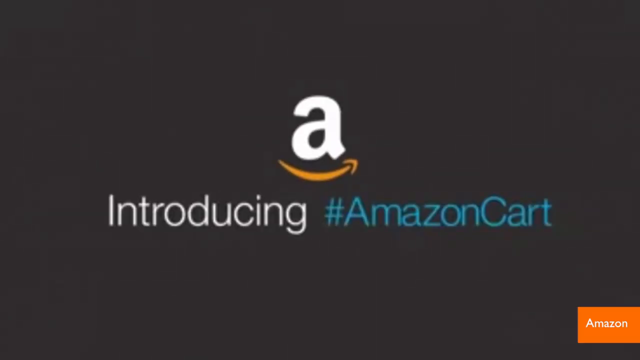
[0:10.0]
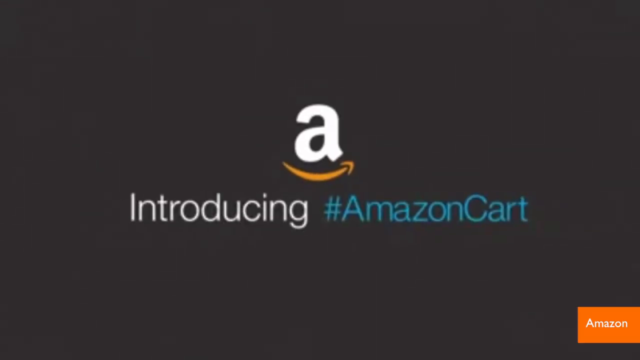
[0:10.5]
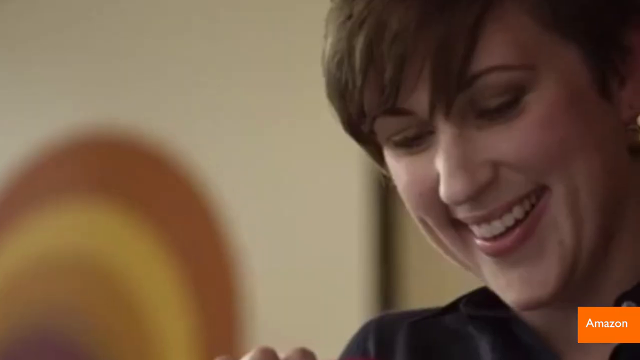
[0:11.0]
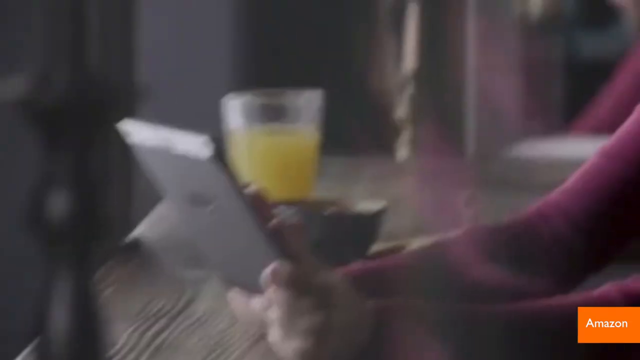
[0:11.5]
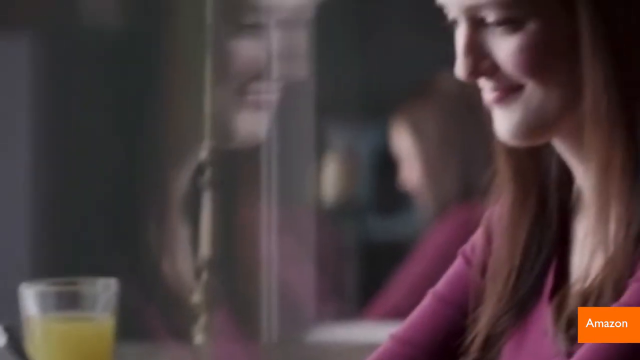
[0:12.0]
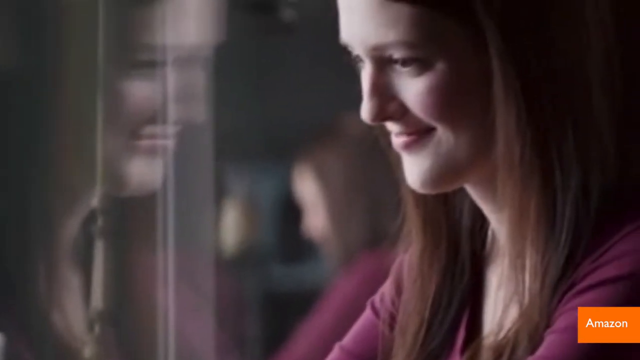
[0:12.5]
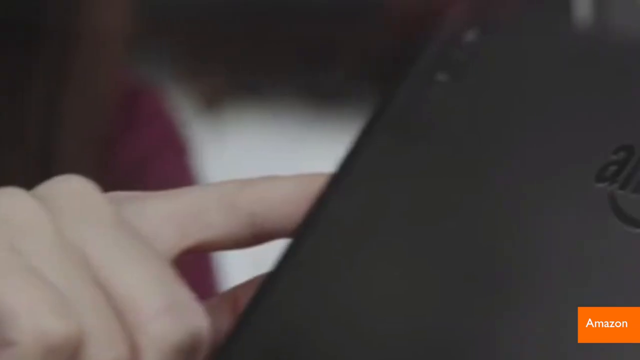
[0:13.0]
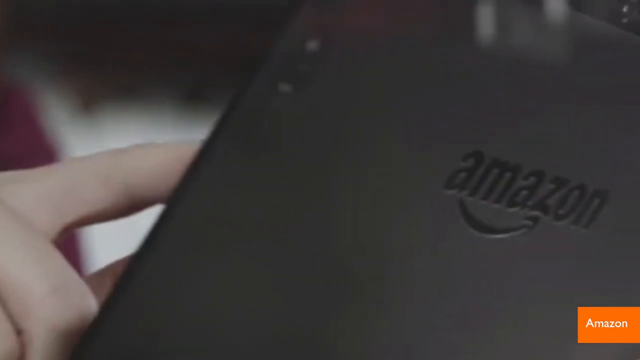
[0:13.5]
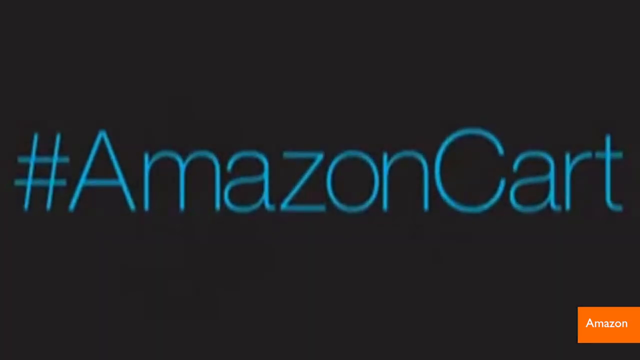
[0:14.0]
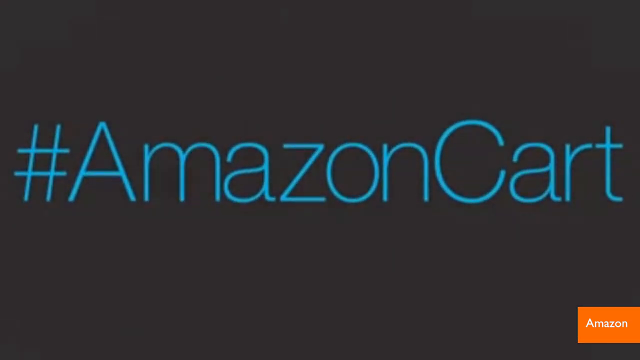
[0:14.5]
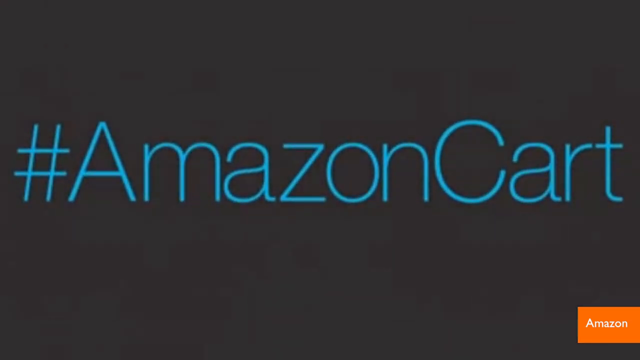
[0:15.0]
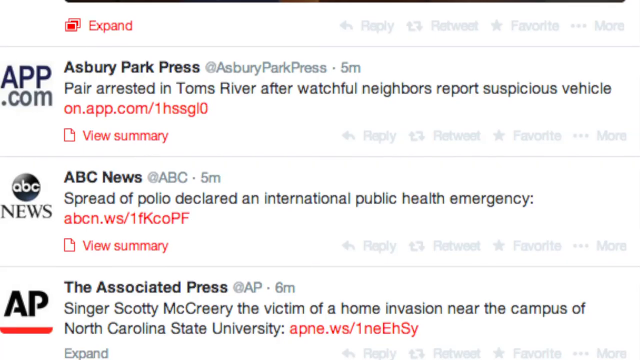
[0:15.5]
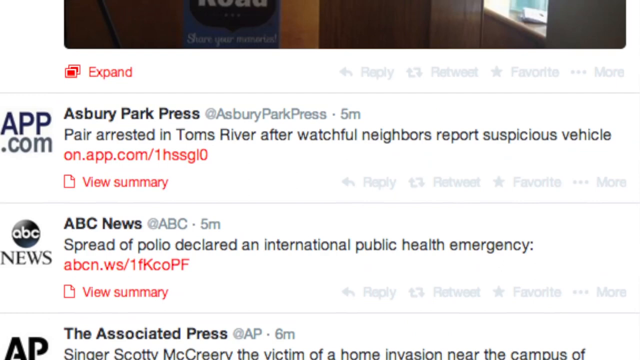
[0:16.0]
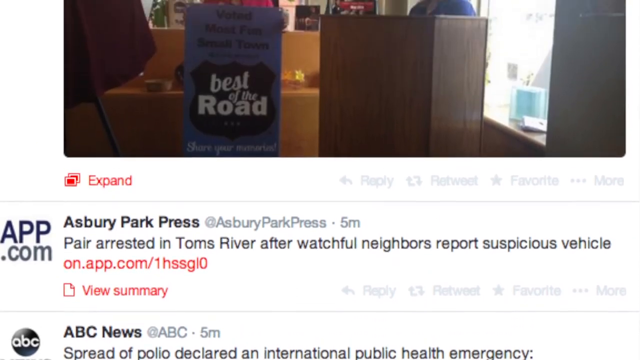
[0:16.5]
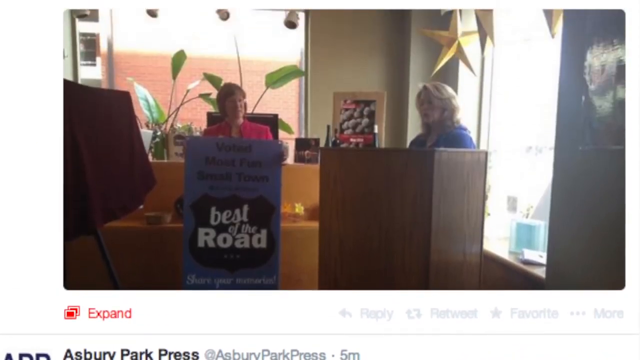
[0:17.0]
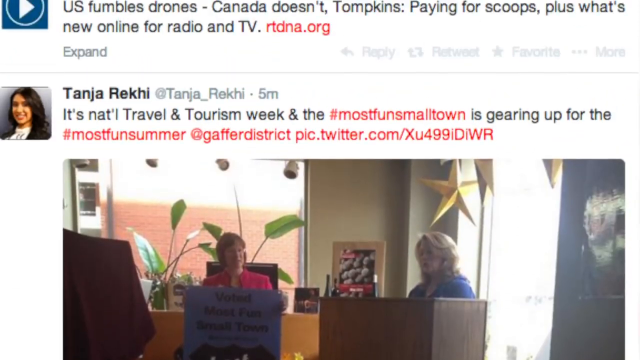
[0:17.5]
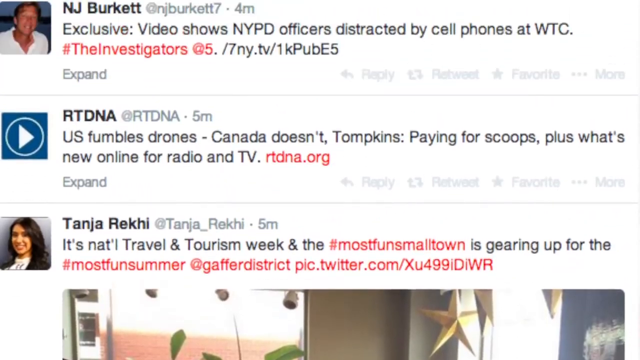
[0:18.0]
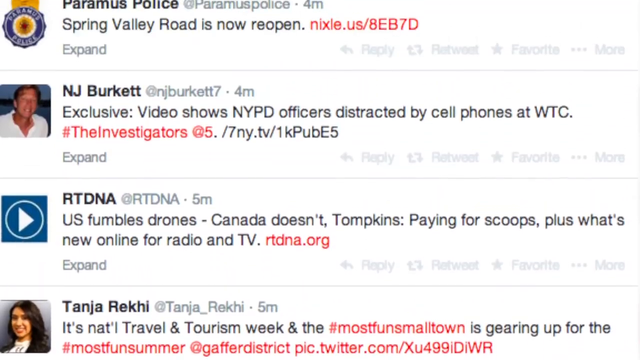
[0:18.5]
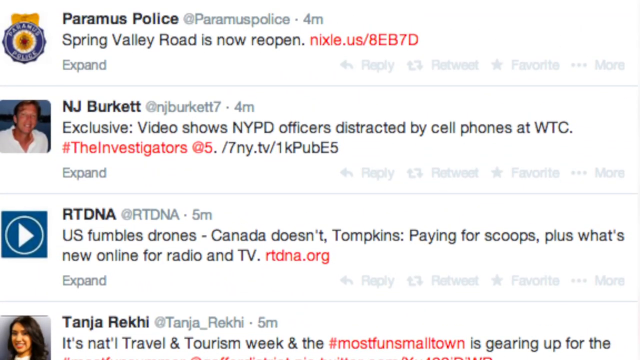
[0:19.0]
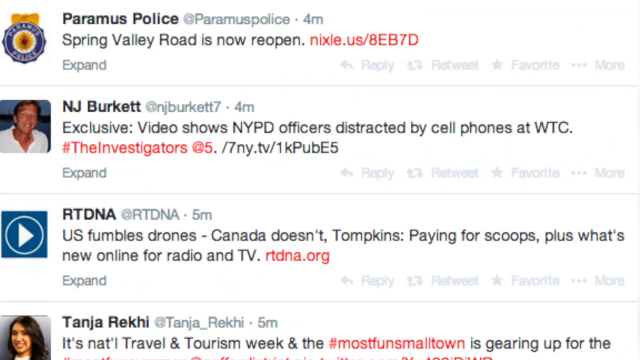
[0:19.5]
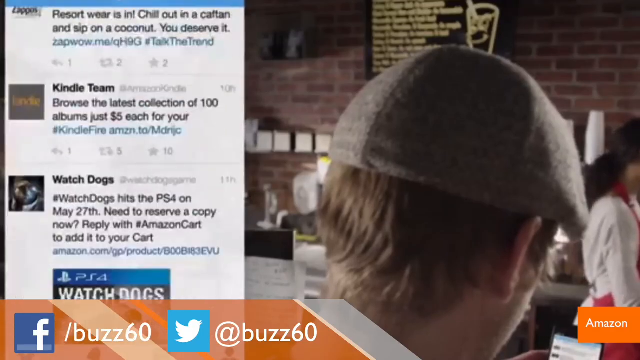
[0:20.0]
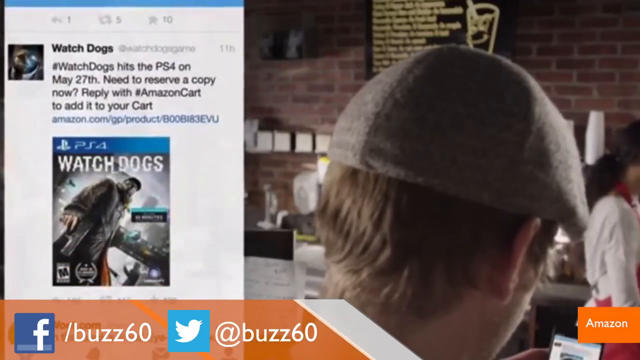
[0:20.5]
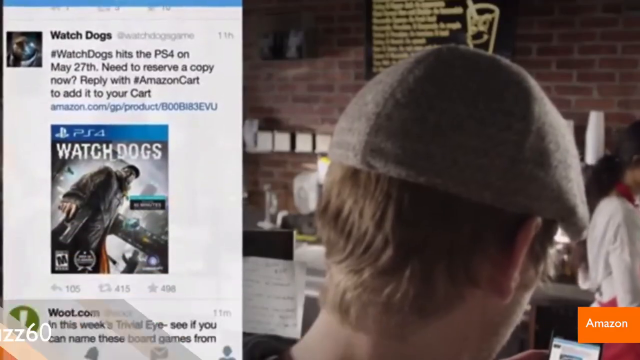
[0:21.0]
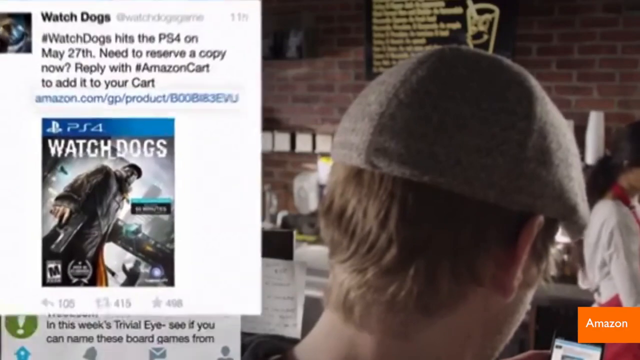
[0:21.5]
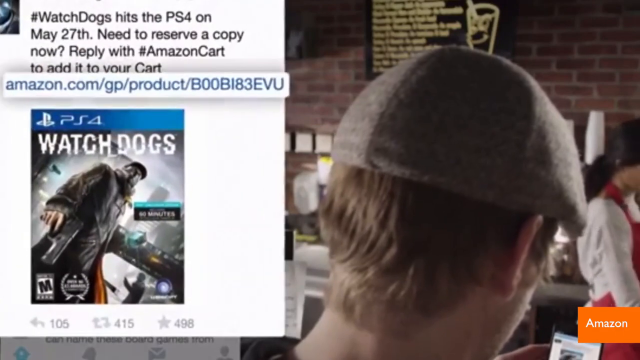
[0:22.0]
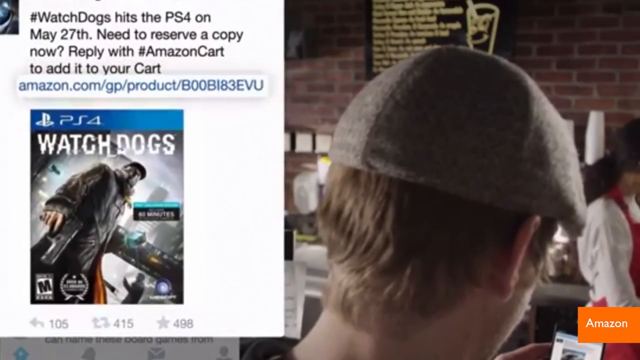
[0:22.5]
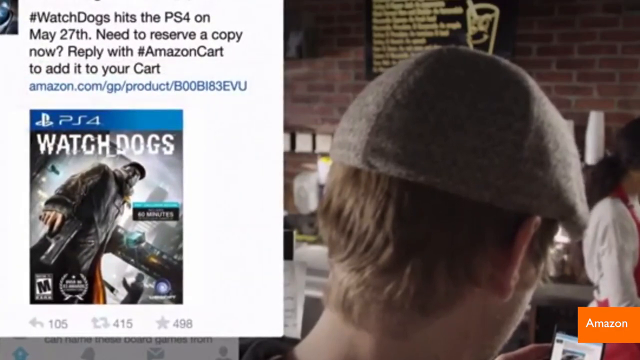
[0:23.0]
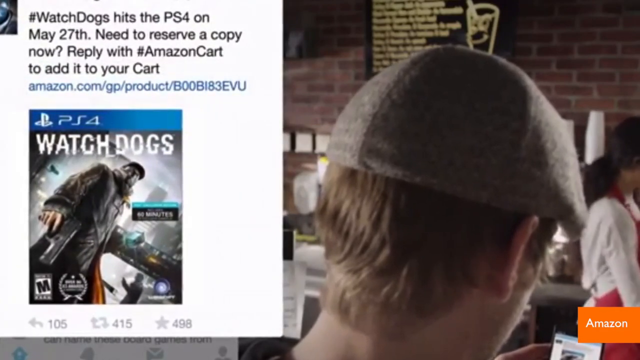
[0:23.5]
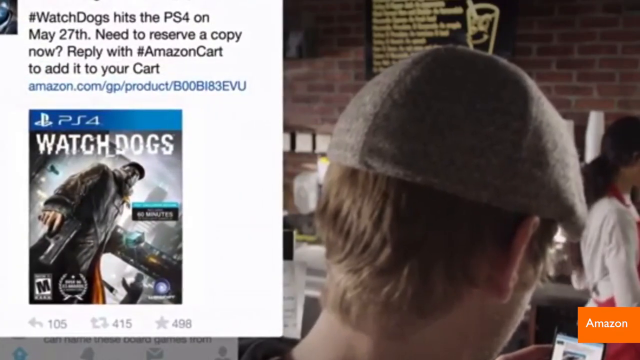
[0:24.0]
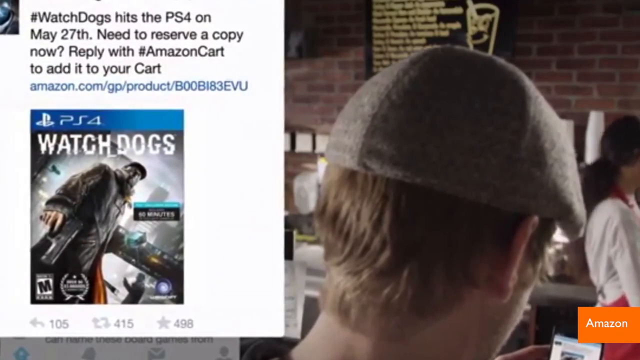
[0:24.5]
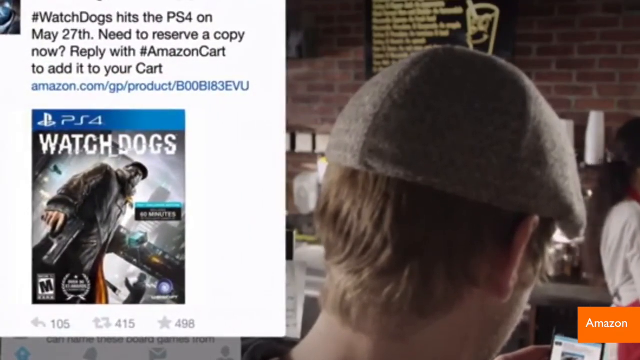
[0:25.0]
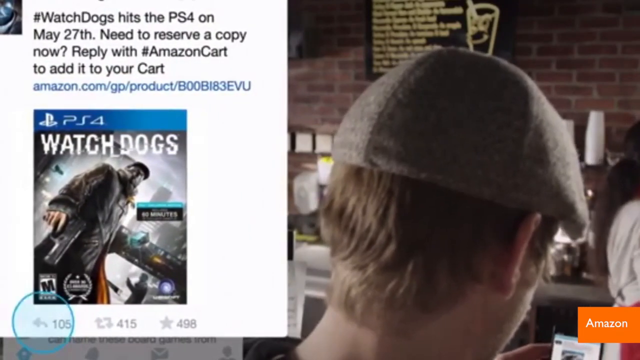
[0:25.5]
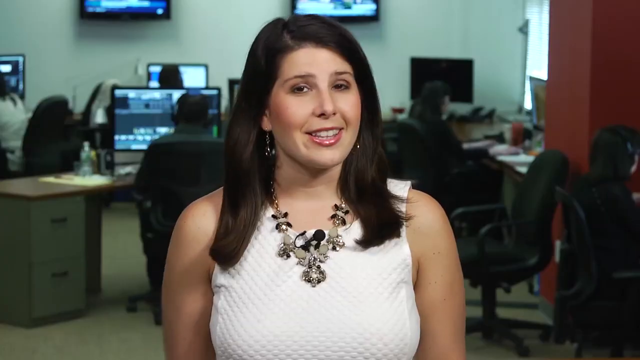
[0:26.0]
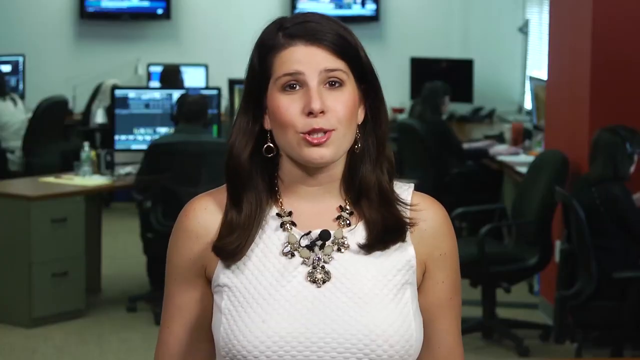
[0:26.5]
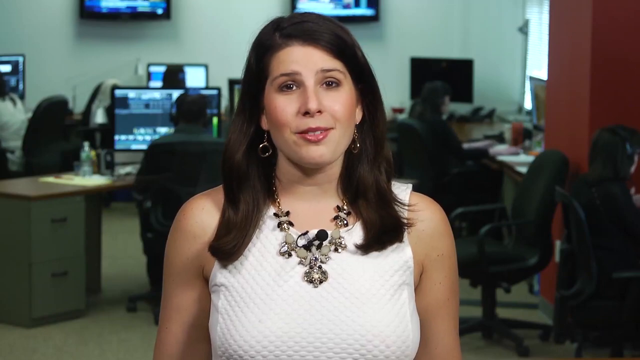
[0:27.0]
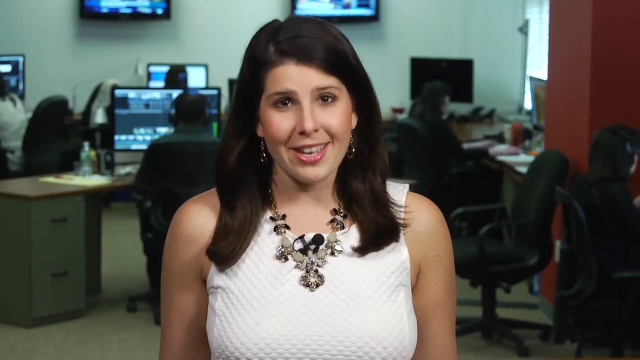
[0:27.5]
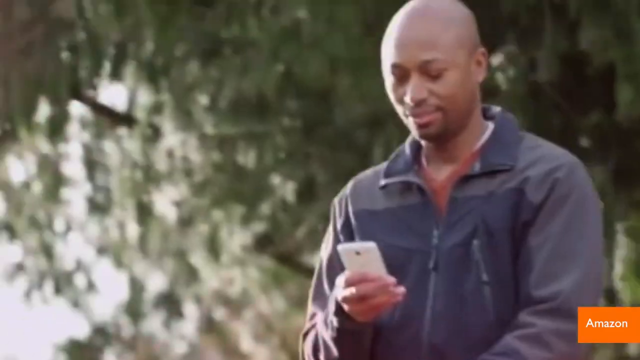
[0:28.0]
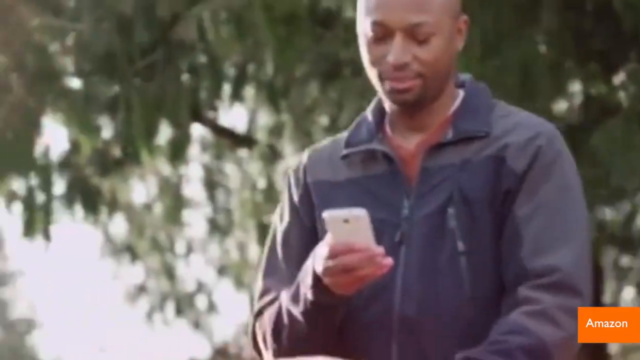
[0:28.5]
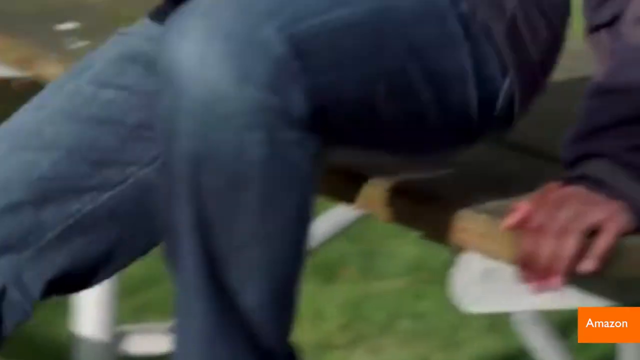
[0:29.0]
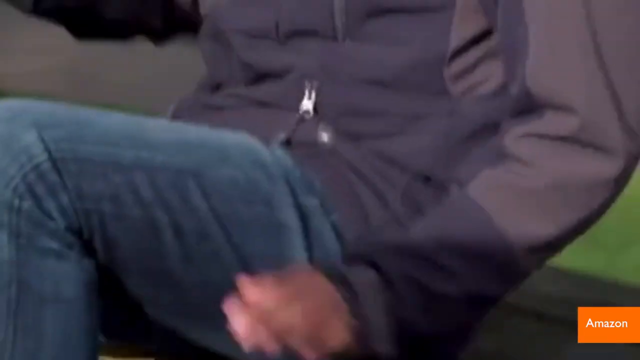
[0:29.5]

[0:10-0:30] The shot opens quickly on "Introducing Amazon Cart." A lady is smiling. A young girl is on a tablet, probably at her house; she smiles while scrolling on Amazon. Then "at Amazon Cart" appears, followed by a quick skip through social media posts, including one about travel and tourism; nothing about Amazon seems to be on them, apparently just different social media. A man's picture appears and the view scrolls down to text reading "Watchdog hits PS4. Need to reserve a copy? Reply with Amazon Cart and add it to your cart," singling out the Watch Dogs image. The news reporter talks in the newsroom again, wearing a white shirt and jewelry, giving a quick talk. A middle-aged African-American man walks, then sits on a bench with his phone and looks like he is looking through something on it.